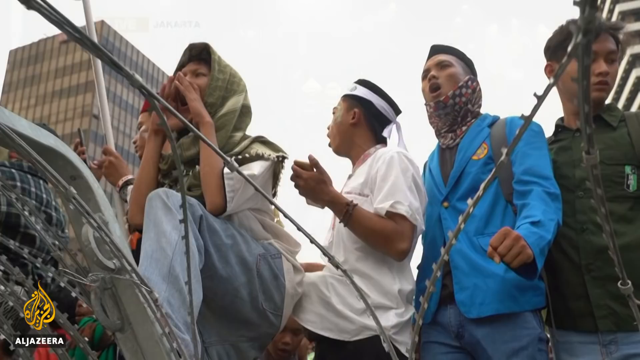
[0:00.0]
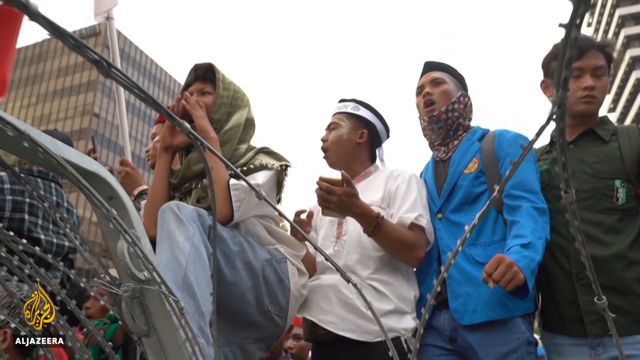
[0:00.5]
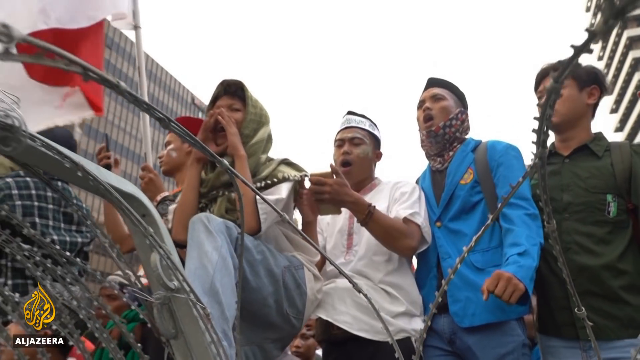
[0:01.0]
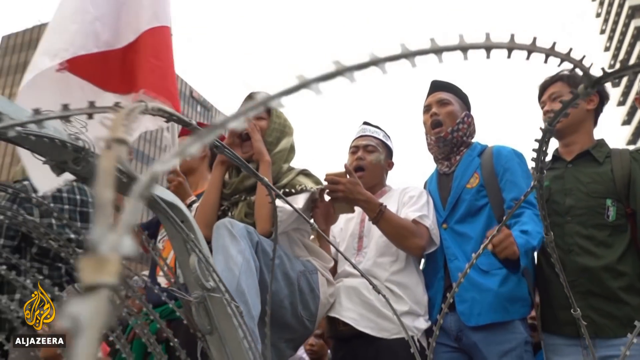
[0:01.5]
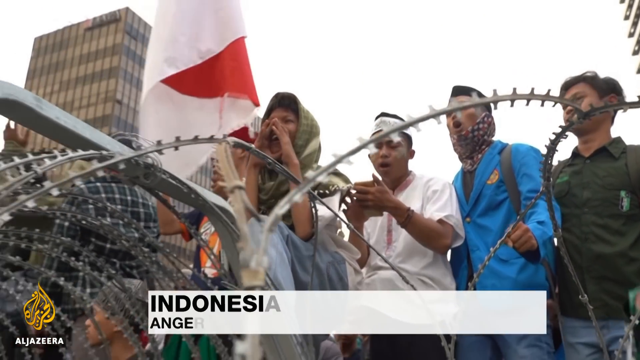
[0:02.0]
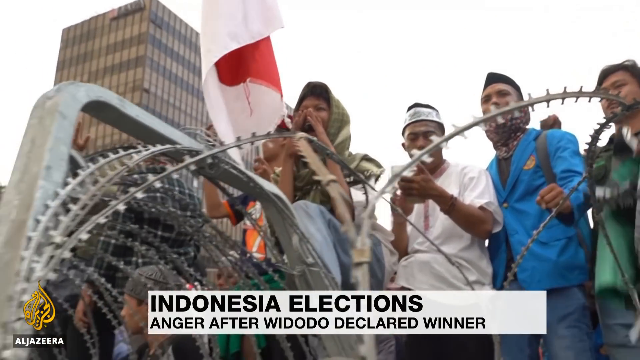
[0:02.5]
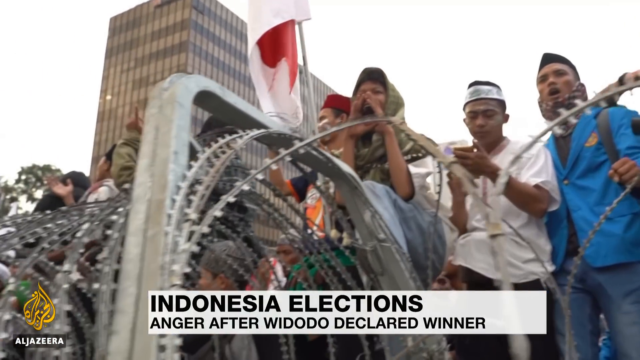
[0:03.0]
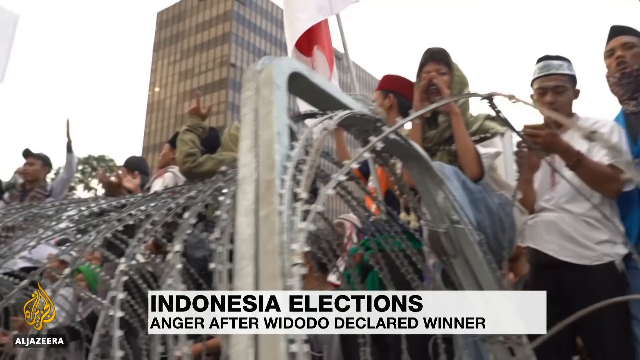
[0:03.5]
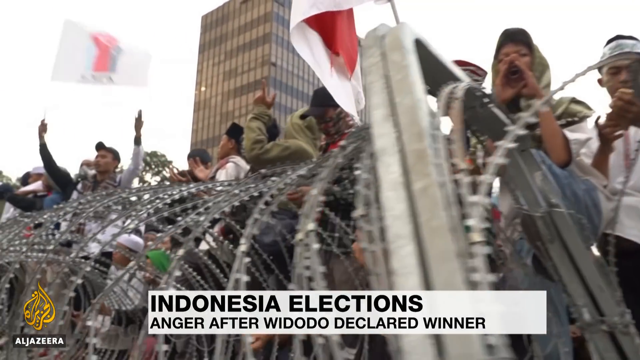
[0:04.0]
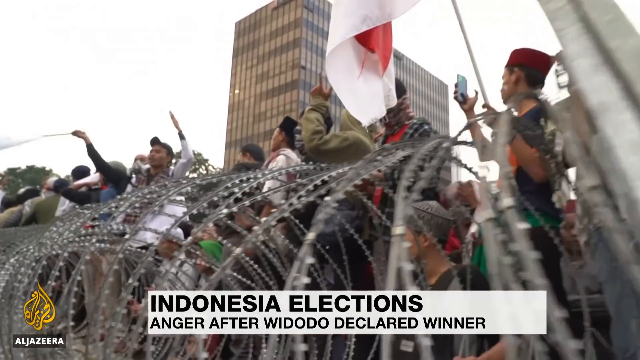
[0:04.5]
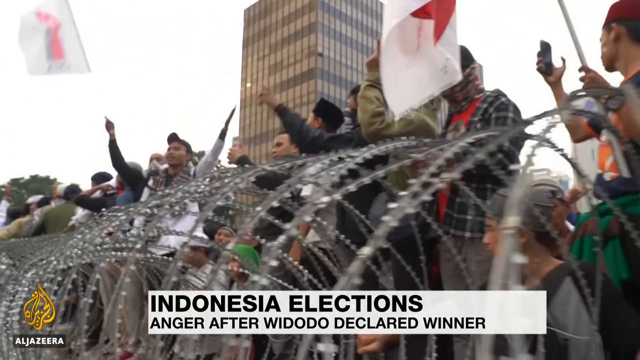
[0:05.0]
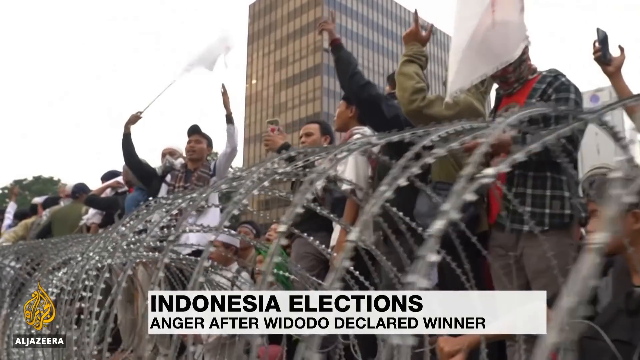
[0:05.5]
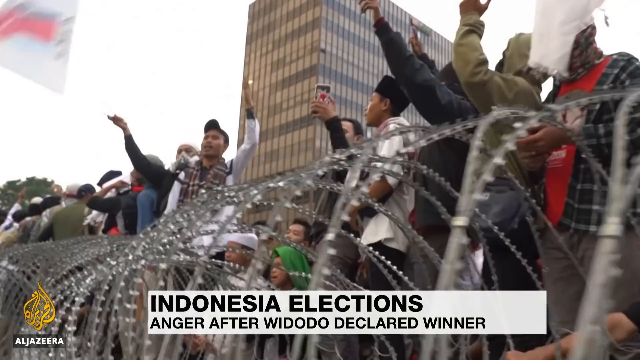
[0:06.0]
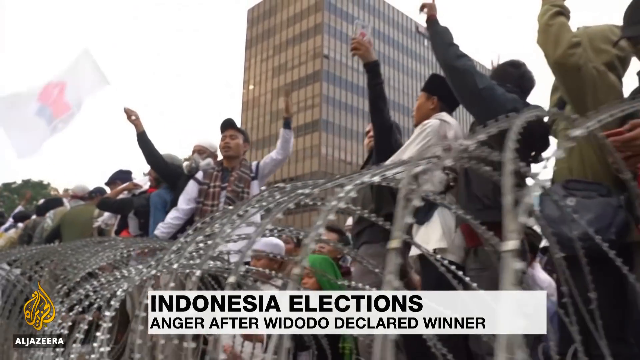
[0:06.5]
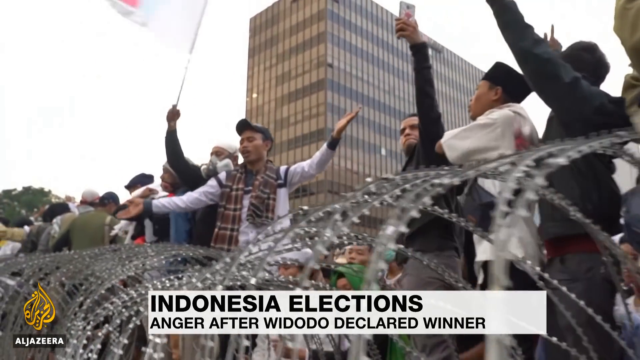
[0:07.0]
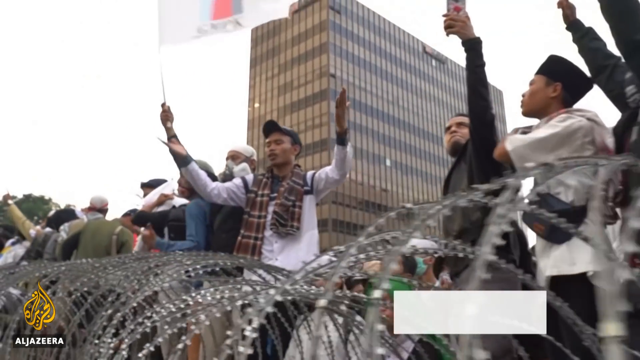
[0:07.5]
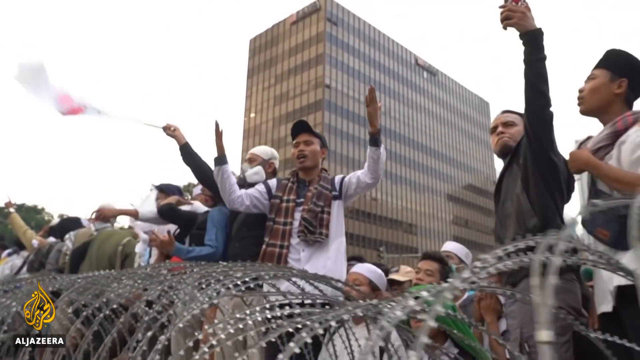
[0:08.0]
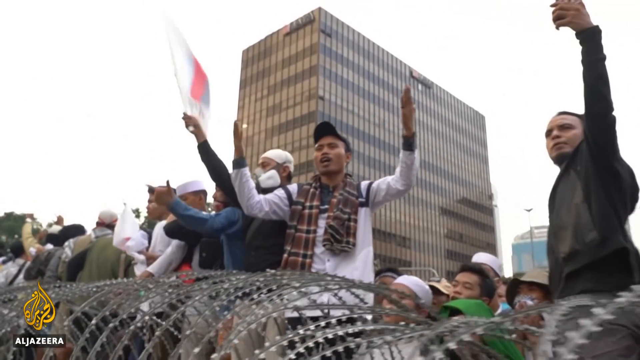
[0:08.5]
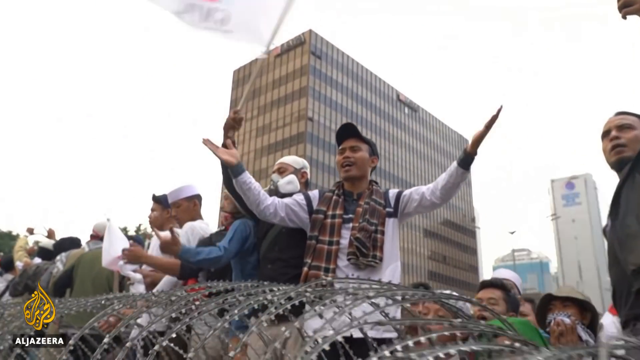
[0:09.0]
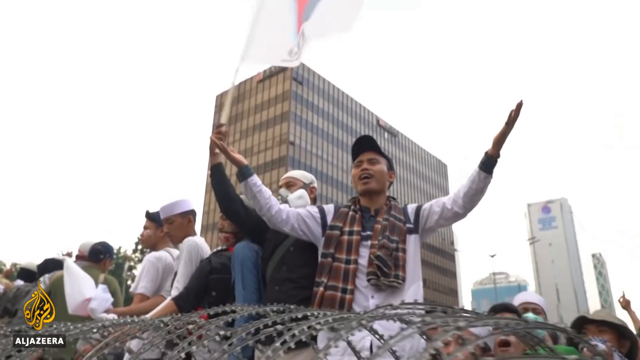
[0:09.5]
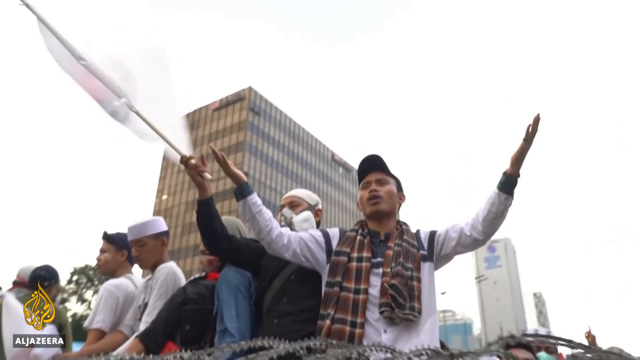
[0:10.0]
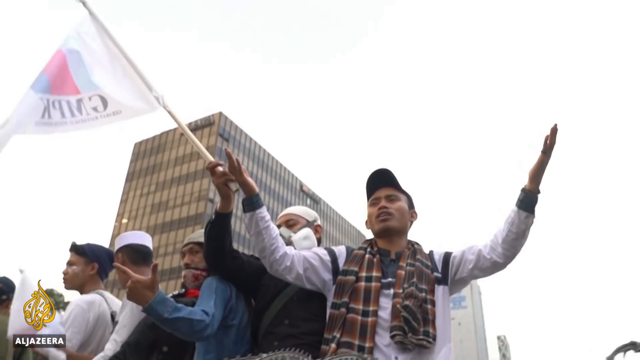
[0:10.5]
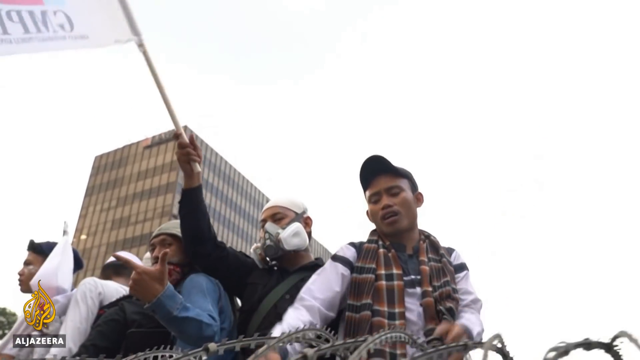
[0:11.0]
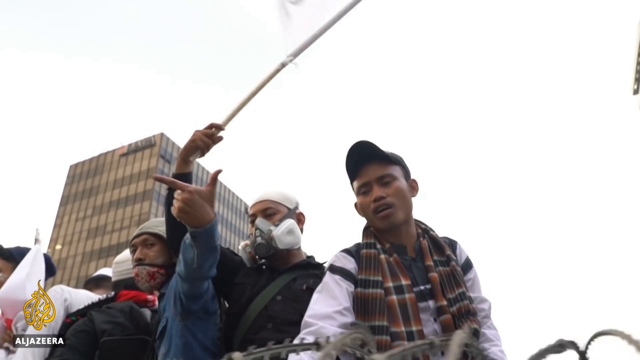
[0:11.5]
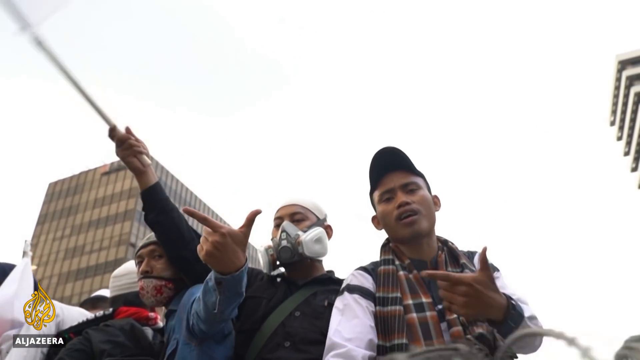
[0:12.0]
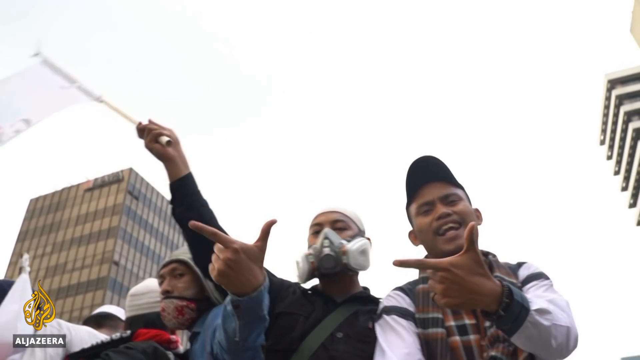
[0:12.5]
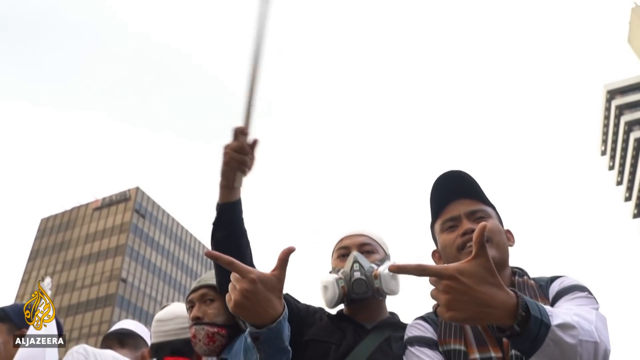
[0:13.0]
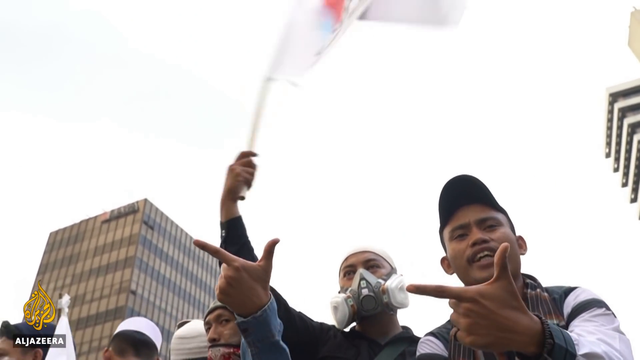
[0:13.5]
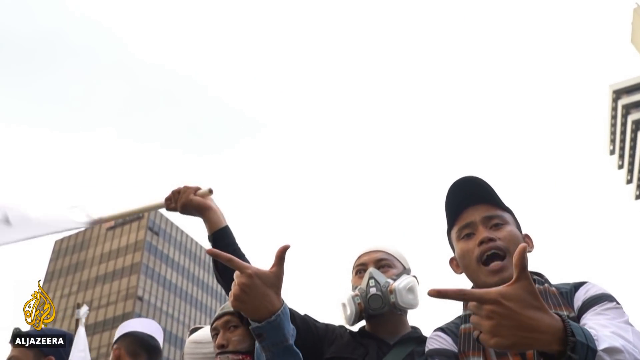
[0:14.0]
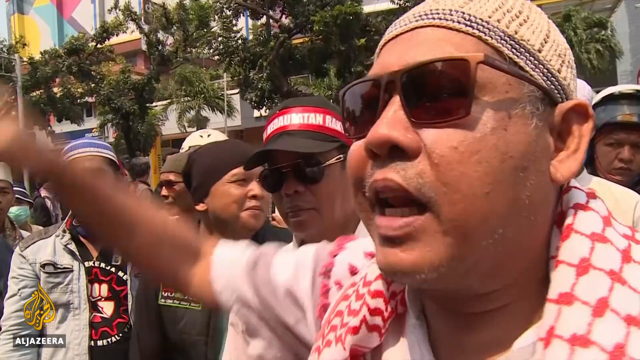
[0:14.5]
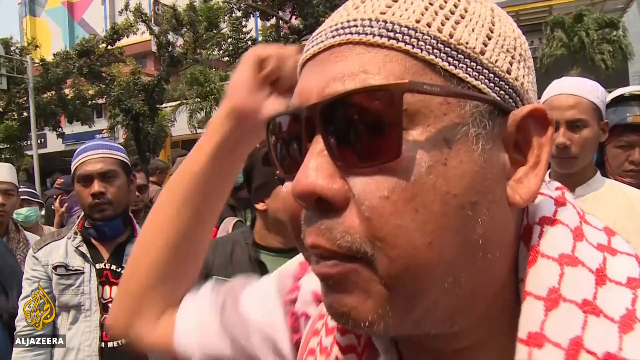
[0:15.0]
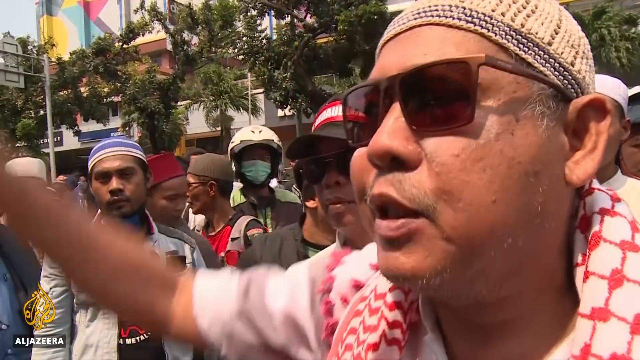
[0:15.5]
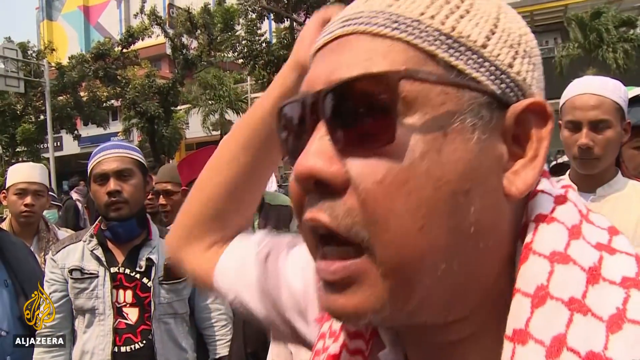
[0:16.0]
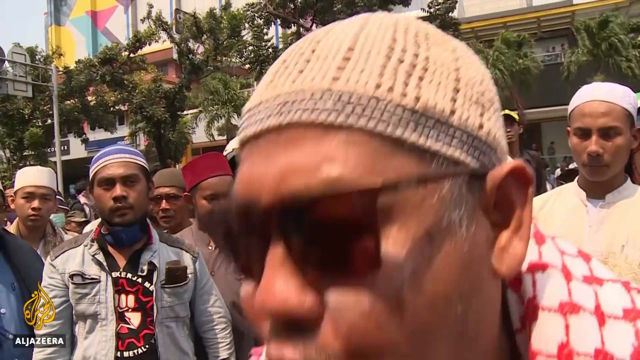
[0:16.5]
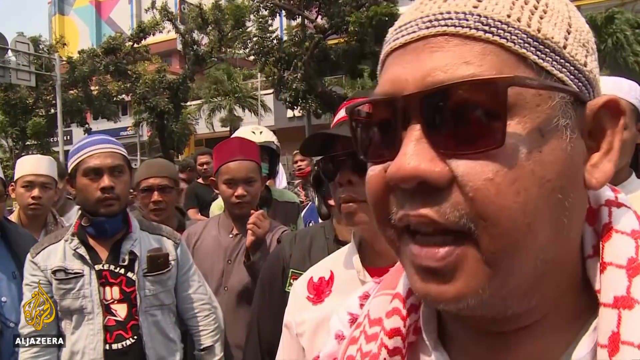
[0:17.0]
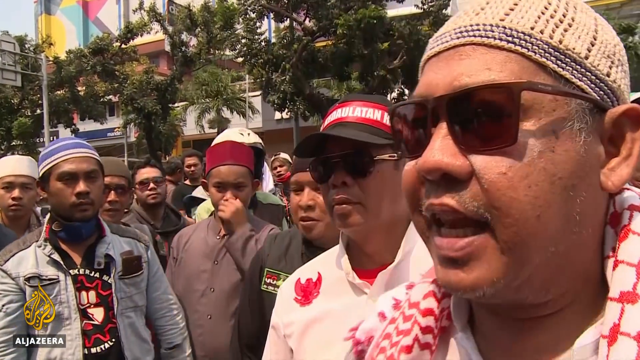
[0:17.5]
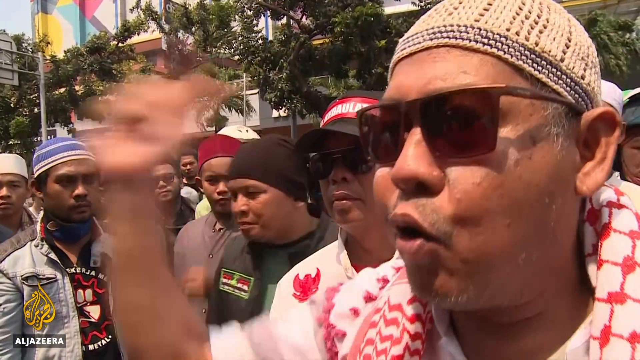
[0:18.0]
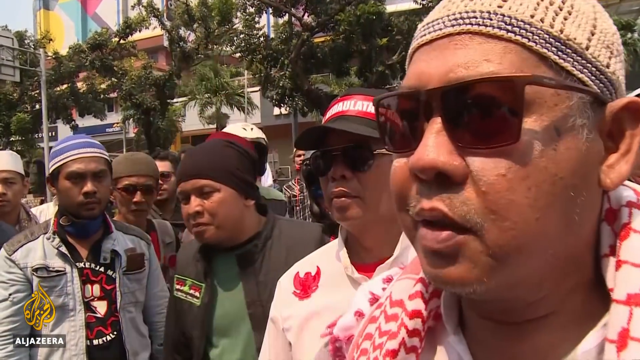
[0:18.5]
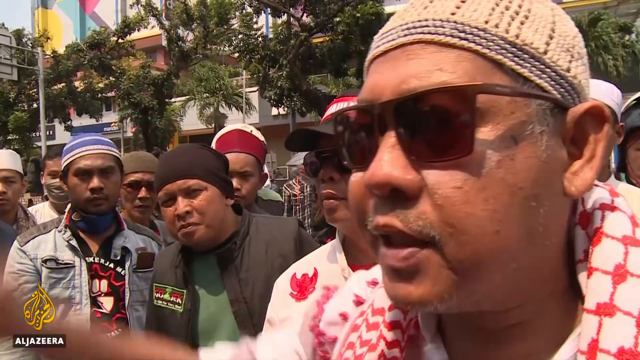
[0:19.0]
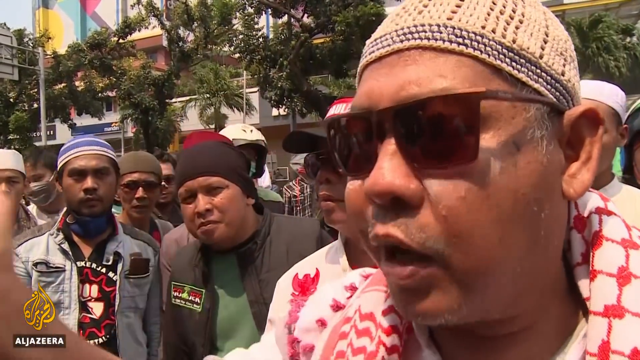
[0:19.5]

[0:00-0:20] Young people ride on a float, and text on the bottom of the screen reads "Indonesia elections" and "anger after Widodo declared winner." The people on the float, who look mostly young, are yelling and waving flags. They look fairly respectful and make a hand gesture holding out a finger and the thumb. They are dressed very nicely; one wears a blue blazer. They raise their hands as if in question, and some of them might be singing. One of them wears a gas mask and waves a flag. On the ground is a group of older people who are angry. One man waves his hand in anger as he talks to somebody who is apparently interviewing him, and the people behind him look quite mad.